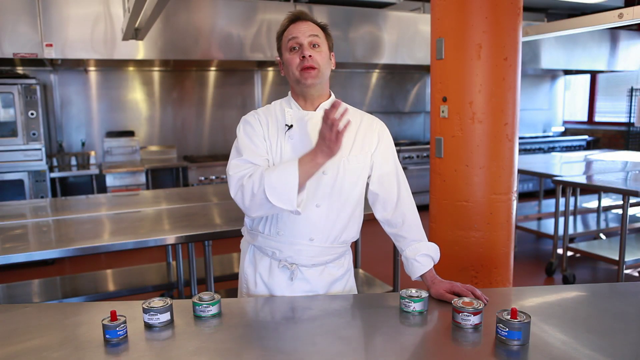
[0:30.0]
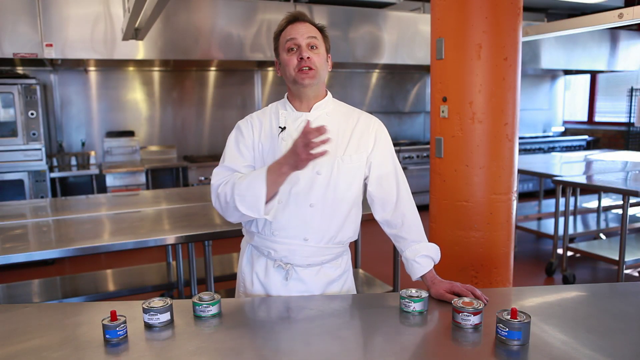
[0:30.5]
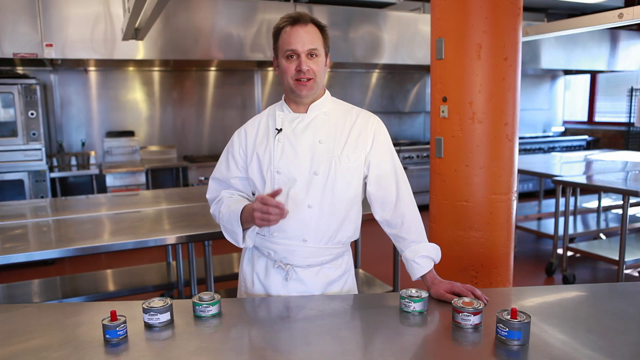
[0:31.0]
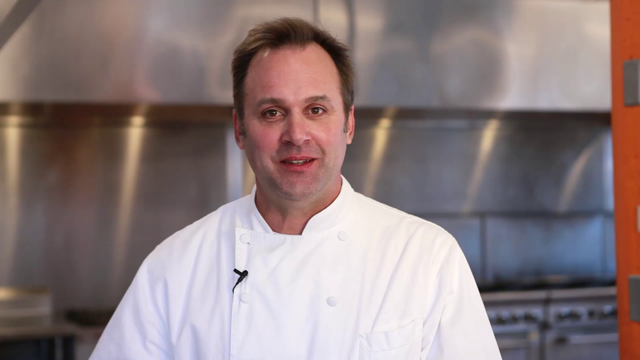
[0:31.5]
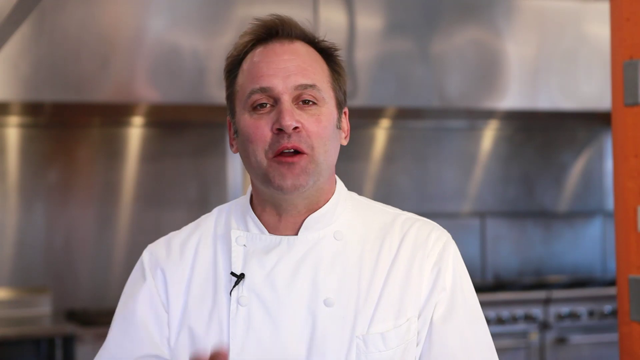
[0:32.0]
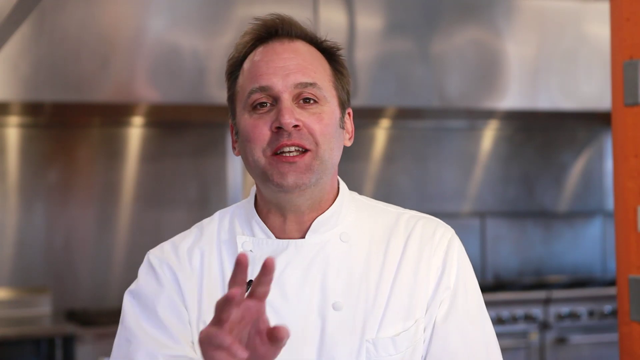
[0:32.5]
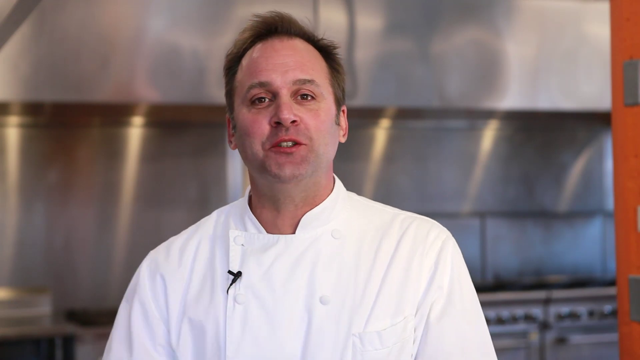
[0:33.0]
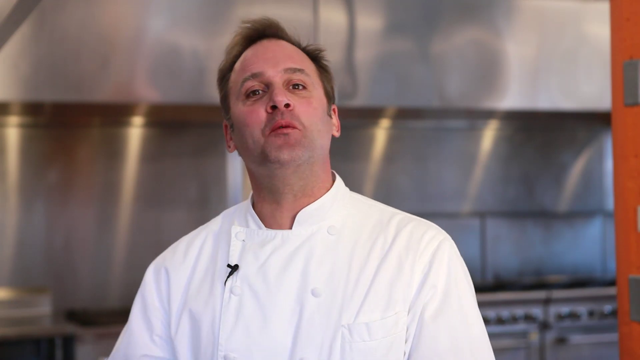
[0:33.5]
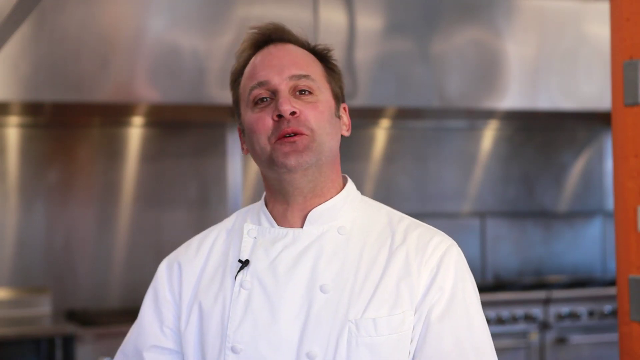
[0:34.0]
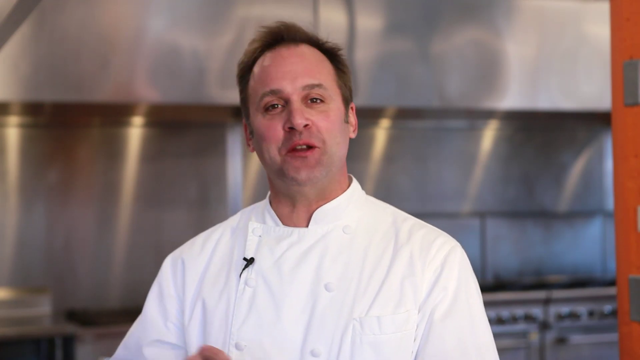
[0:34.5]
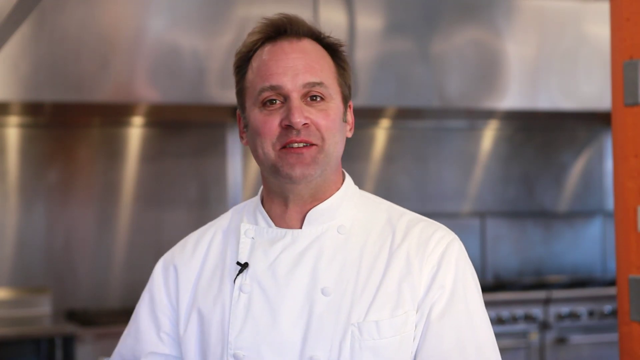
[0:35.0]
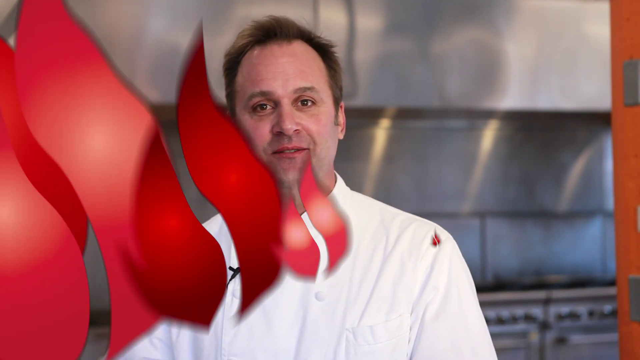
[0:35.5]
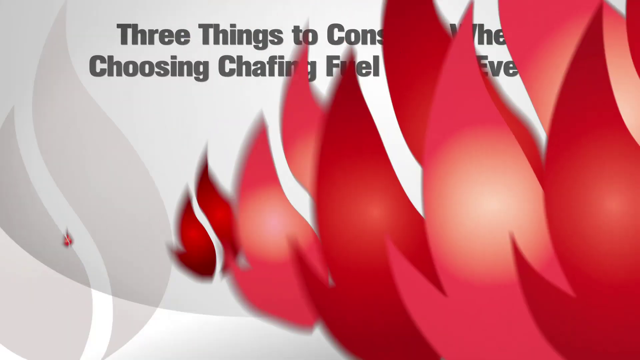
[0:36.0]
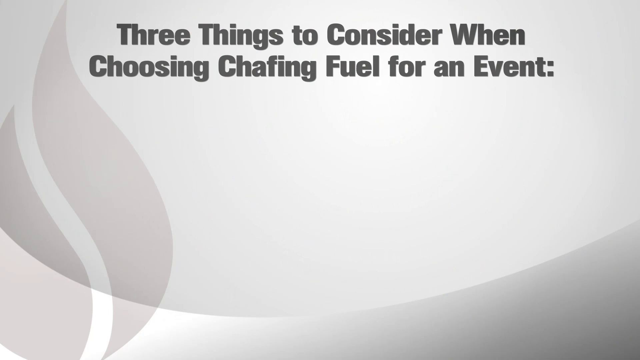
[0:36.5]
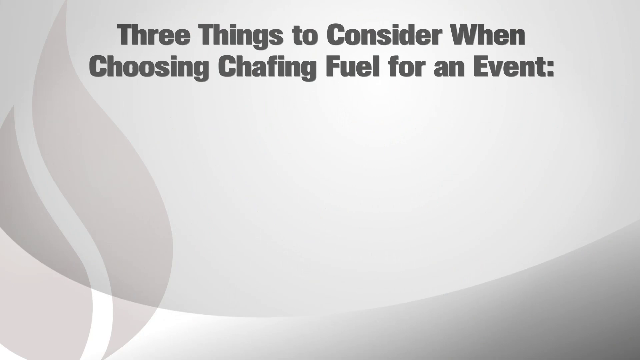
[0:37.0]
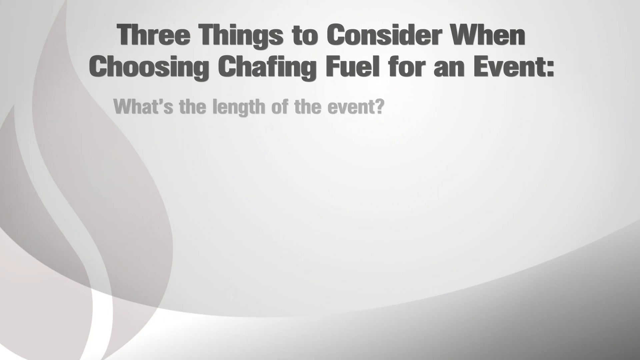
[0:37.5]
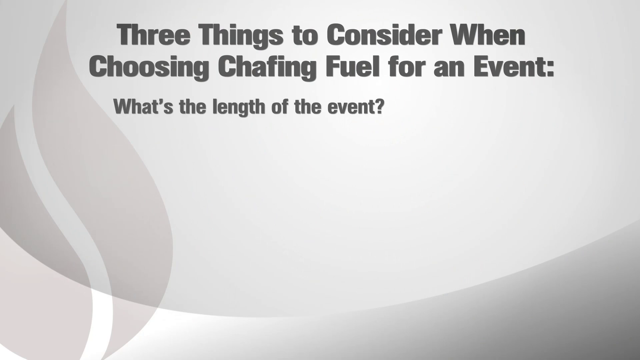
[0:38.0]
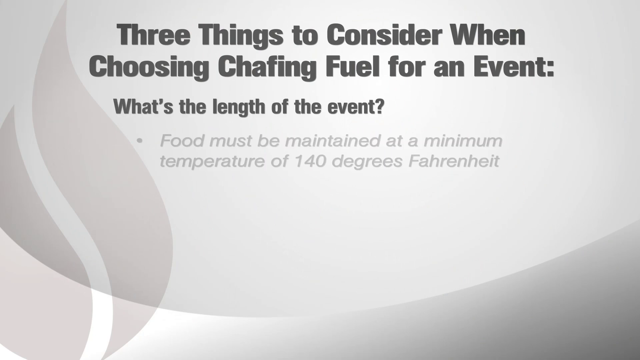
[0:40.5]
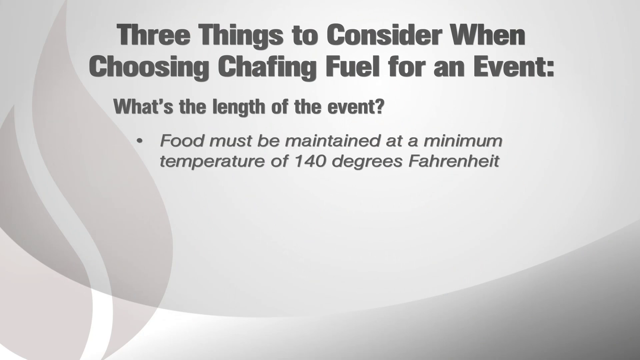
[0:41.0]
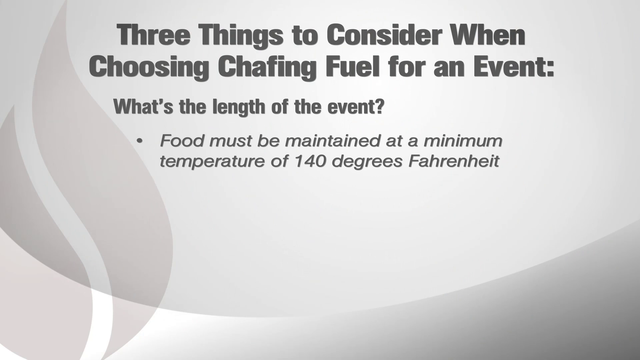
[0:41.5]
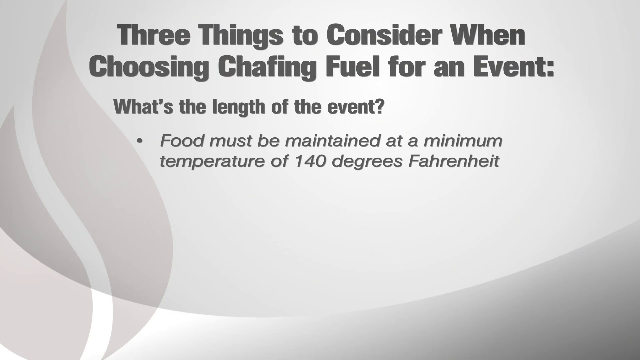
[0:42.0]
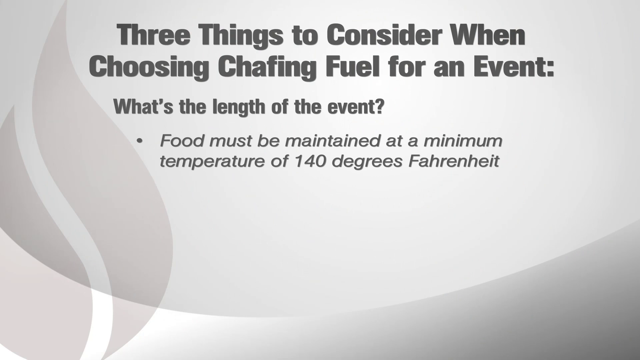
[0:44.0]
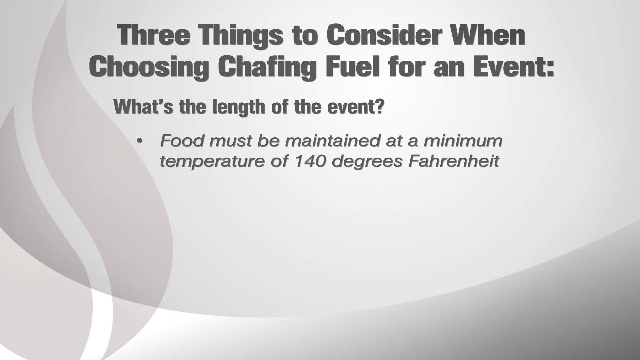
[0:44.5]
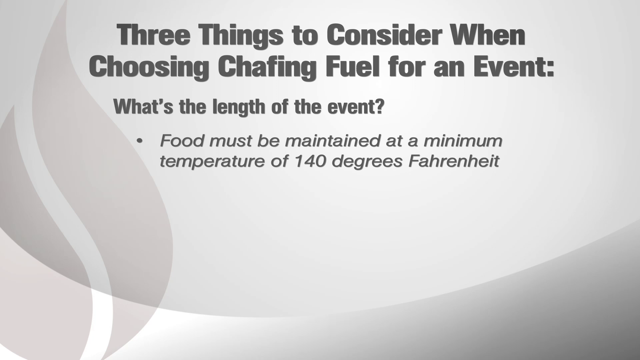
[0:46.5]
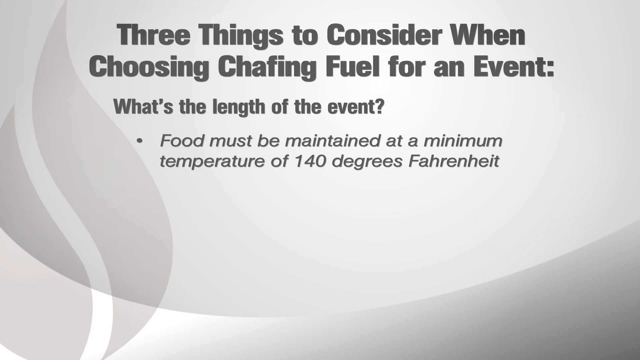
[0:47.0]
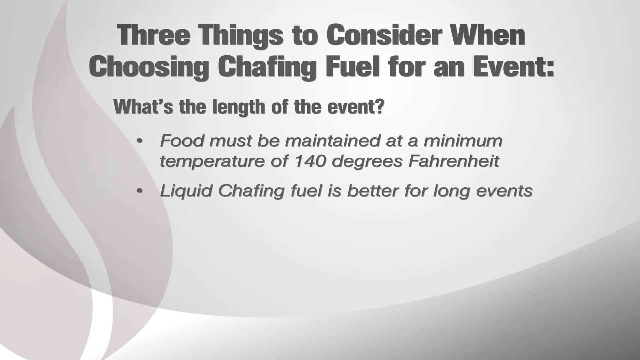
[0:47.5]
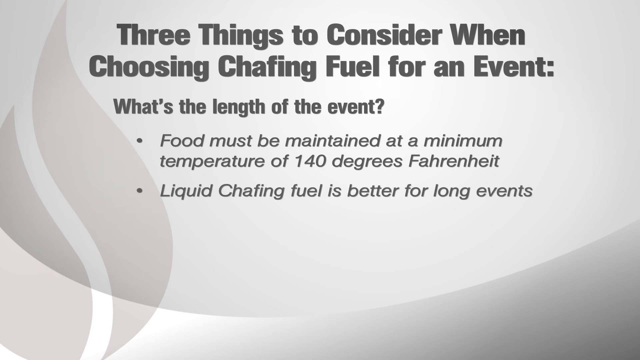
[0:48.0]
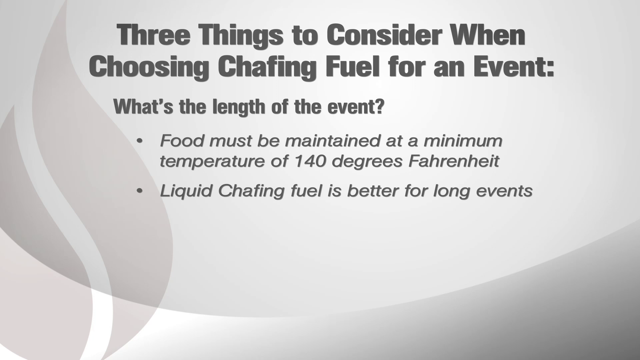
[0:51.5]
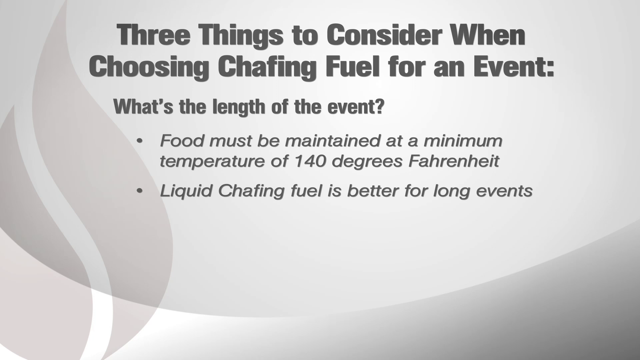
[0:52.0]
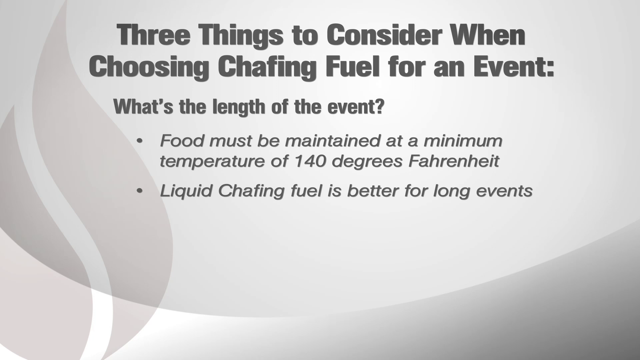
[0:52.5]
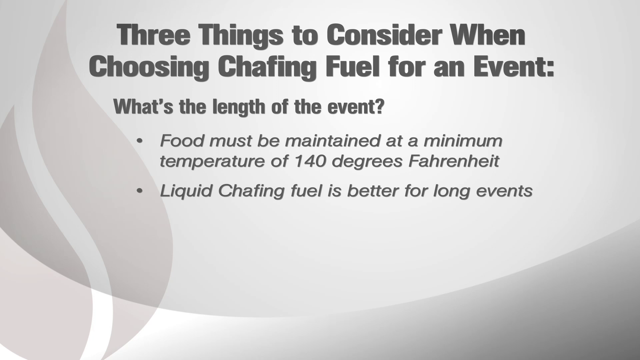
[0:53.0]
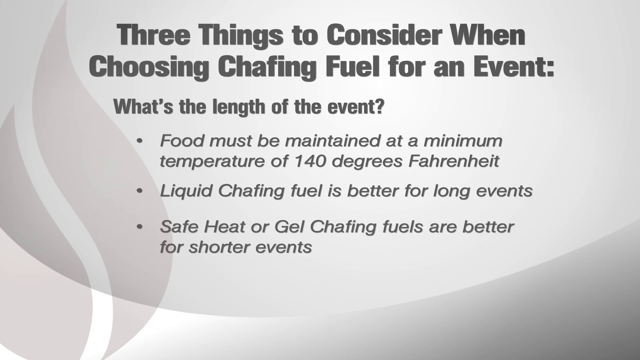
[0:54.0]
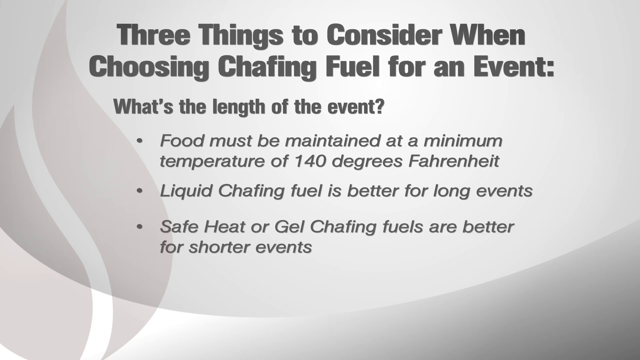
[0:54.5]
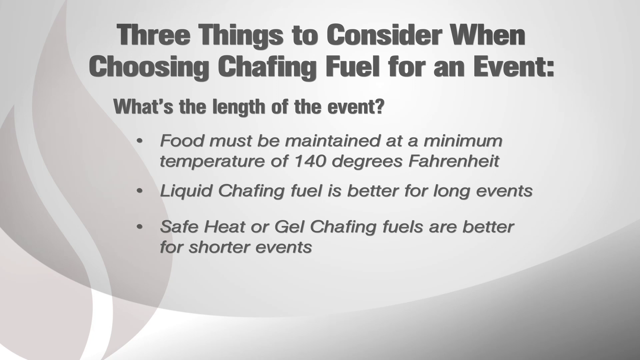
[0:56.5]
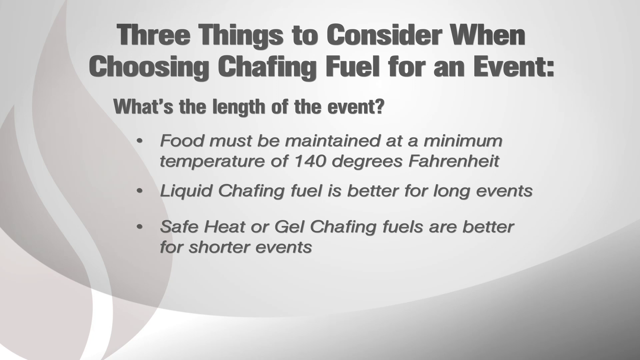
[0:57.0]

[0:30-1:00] A chef stands in a commercial kitchen. He is Caucasian with short brown hair, dressed in white with a white apron, and he speaks to the camera while gesturing with his left hand. Six Sterno cans in front of him are briefly shown; they appear to be different brands and types of Sterno. A close-up follows of the chef's face and shoulders, and red flames appear at the left of the screen and spread all the way across it. A text box in black text then reads "three things to consider when choosing chafing fuel for an event. What's the length of the event? Food must be maintained at a minimum temperature of 140 degrees Fahrenheit. Liquid chafing fuel is better for long events. Safe heat or gel chafing fuels are better for shorter events."